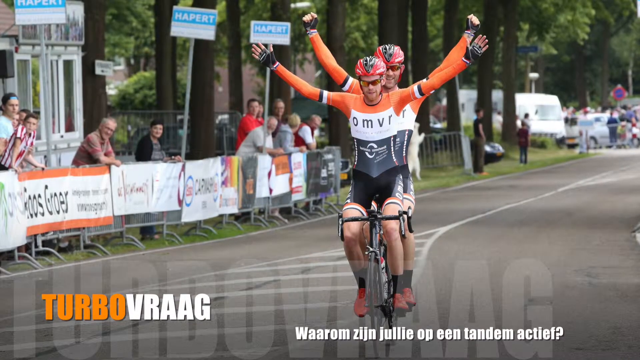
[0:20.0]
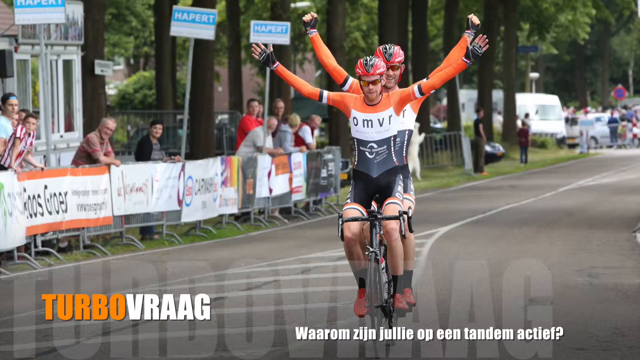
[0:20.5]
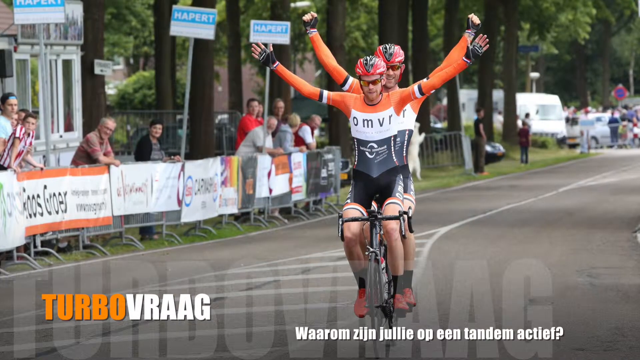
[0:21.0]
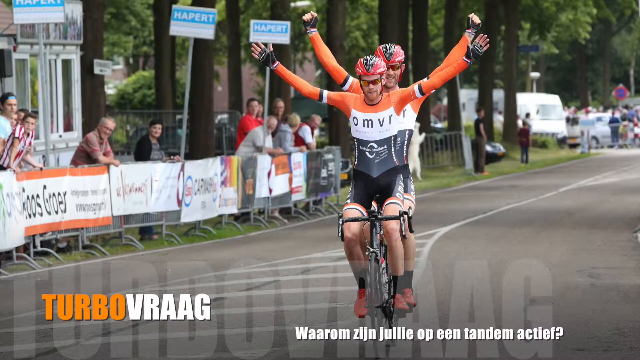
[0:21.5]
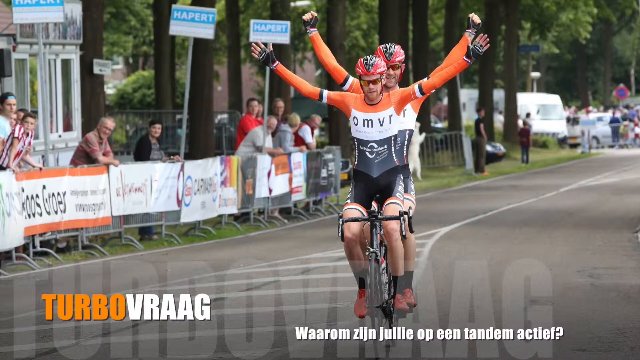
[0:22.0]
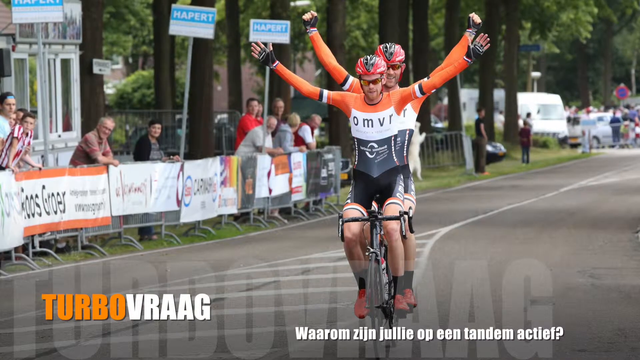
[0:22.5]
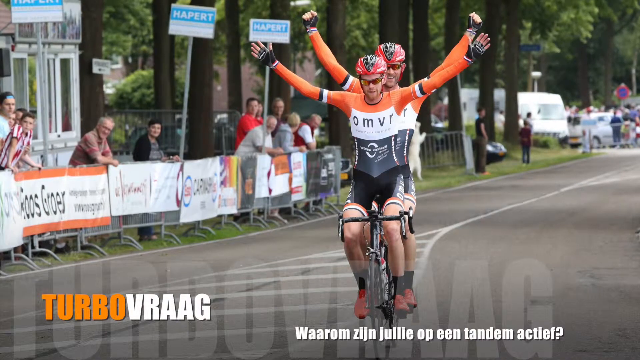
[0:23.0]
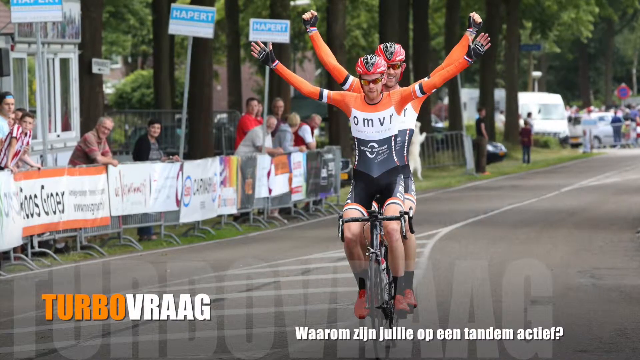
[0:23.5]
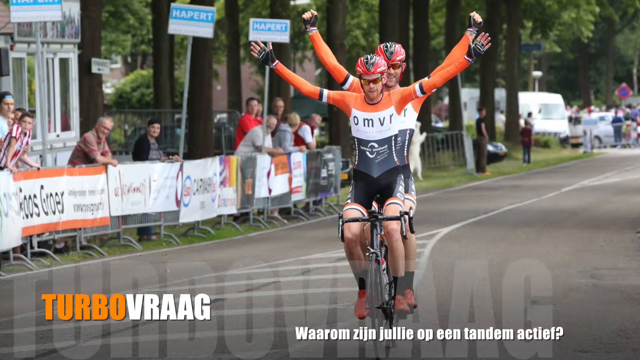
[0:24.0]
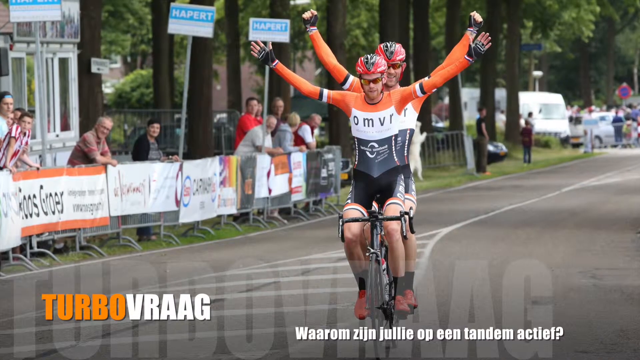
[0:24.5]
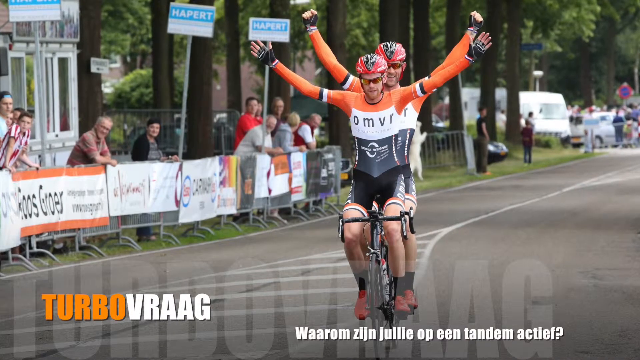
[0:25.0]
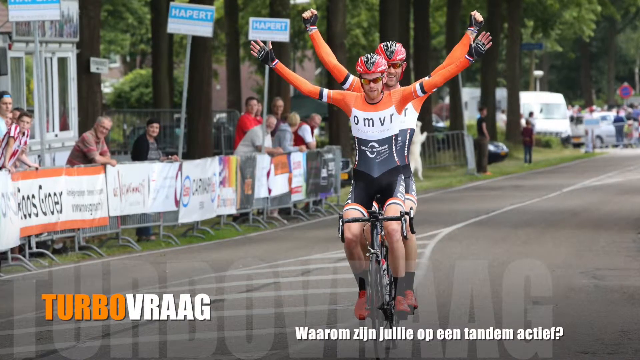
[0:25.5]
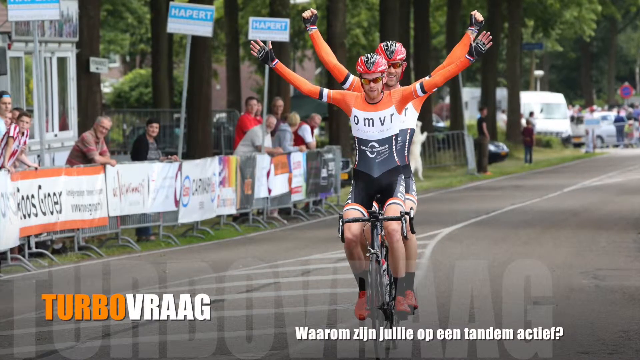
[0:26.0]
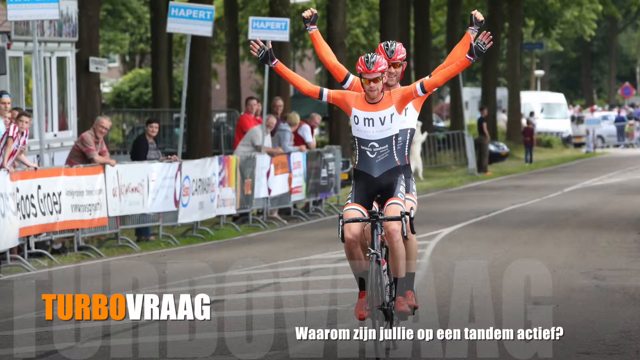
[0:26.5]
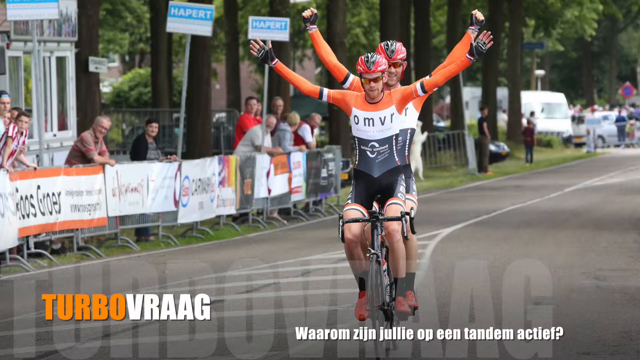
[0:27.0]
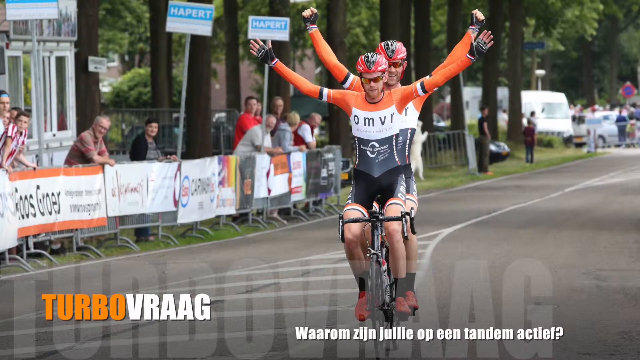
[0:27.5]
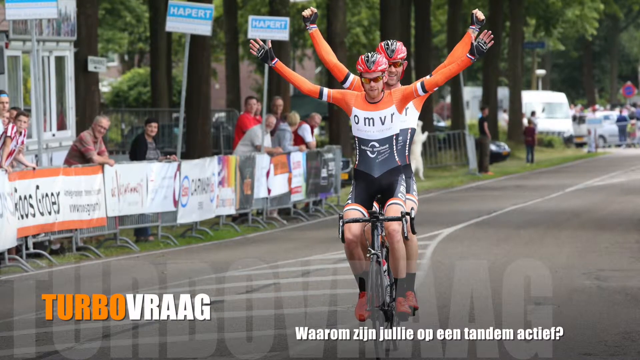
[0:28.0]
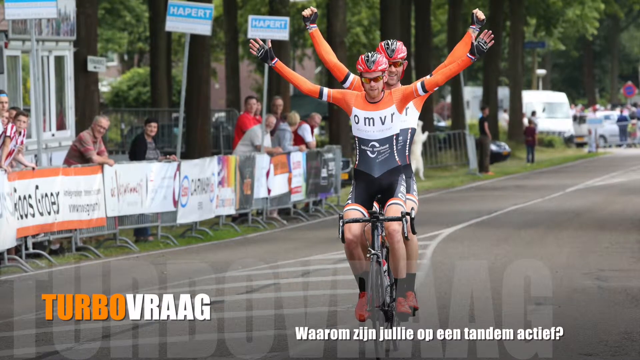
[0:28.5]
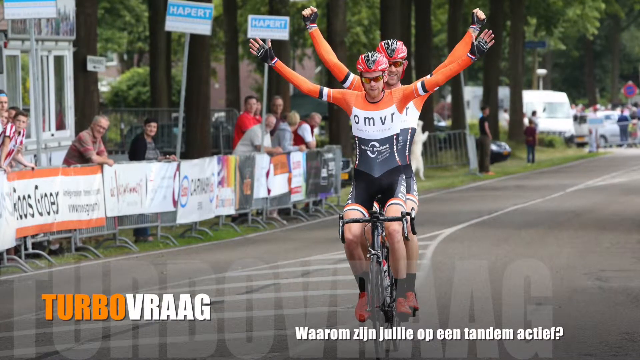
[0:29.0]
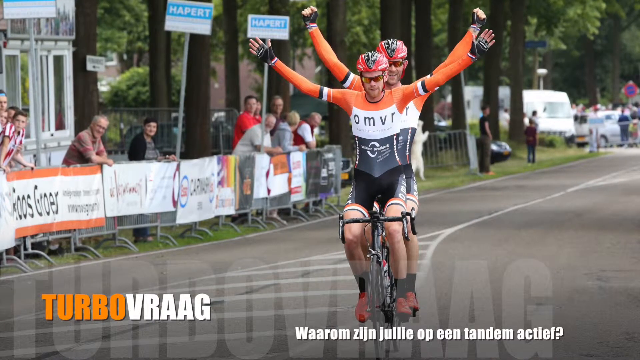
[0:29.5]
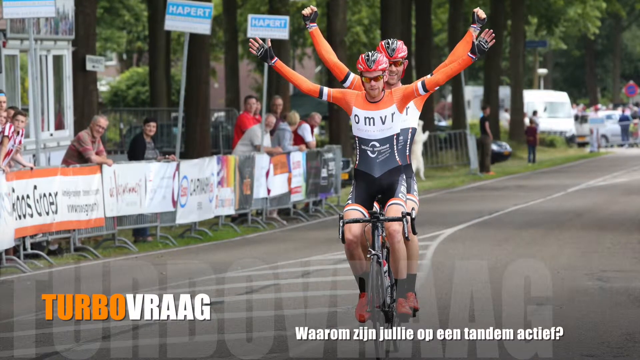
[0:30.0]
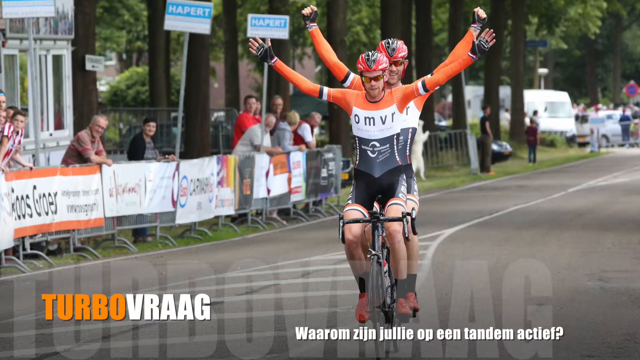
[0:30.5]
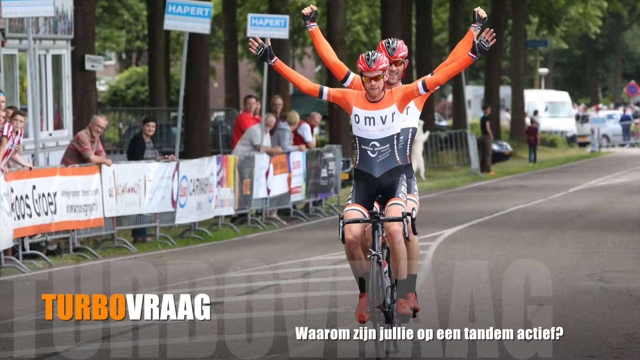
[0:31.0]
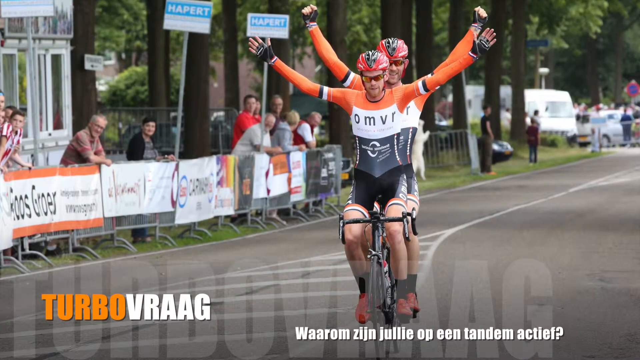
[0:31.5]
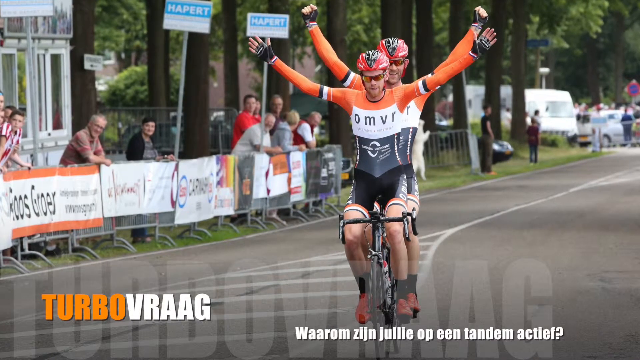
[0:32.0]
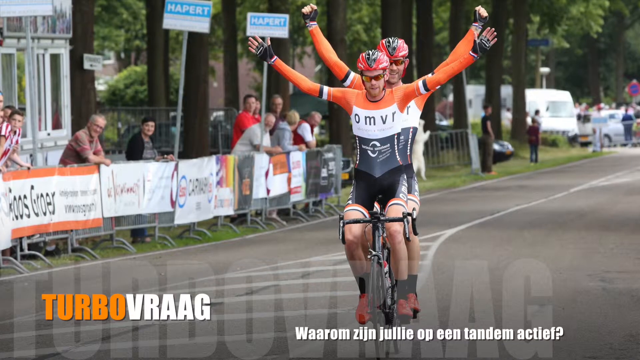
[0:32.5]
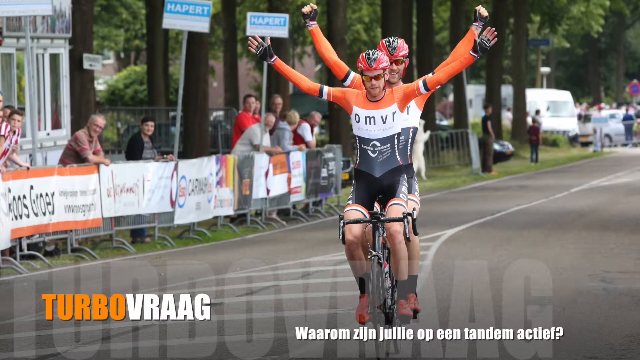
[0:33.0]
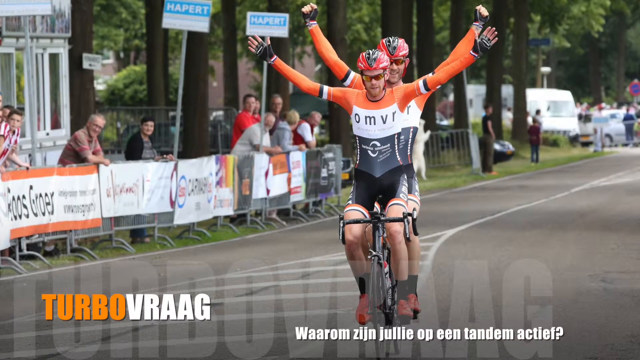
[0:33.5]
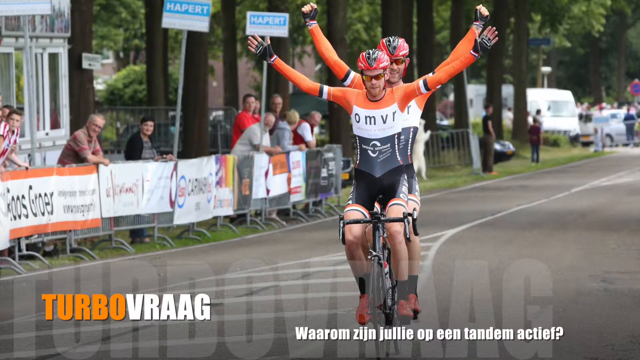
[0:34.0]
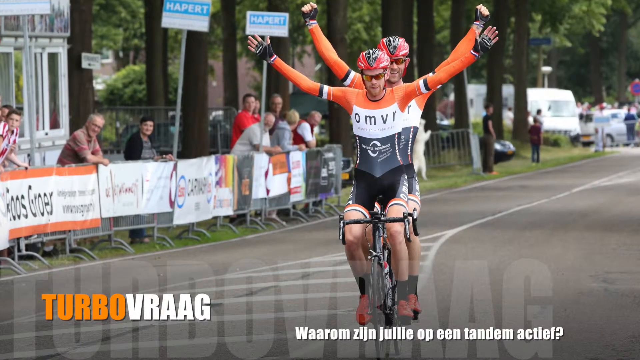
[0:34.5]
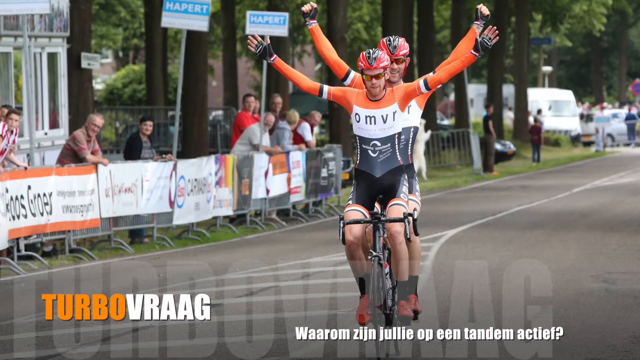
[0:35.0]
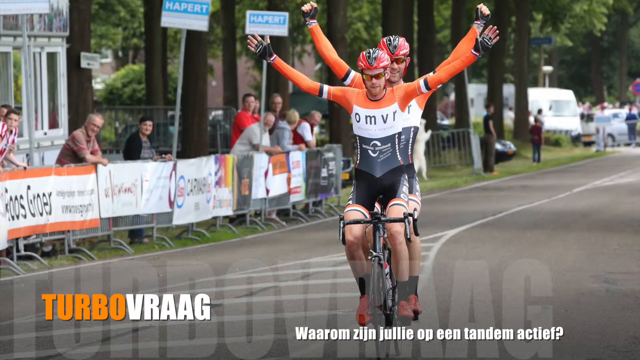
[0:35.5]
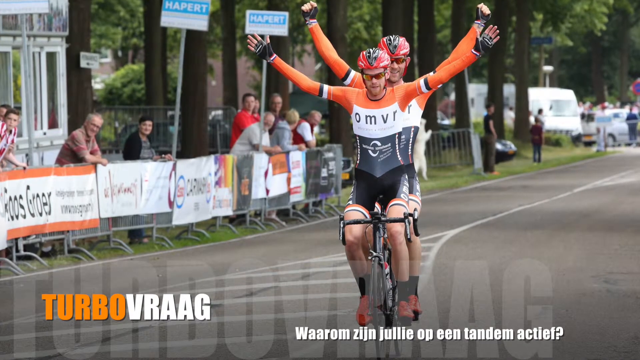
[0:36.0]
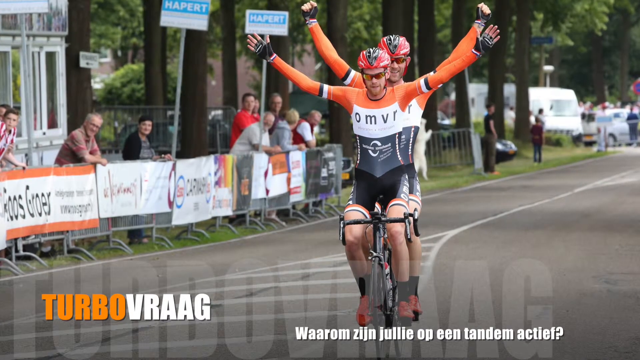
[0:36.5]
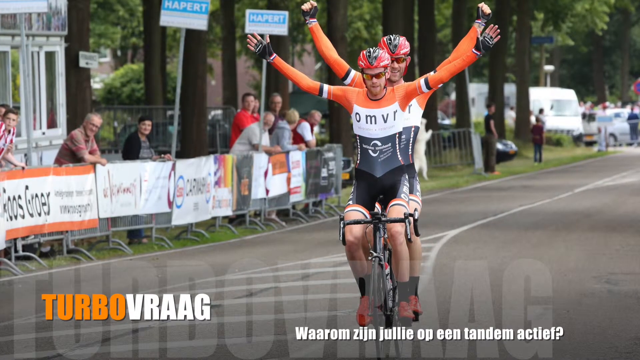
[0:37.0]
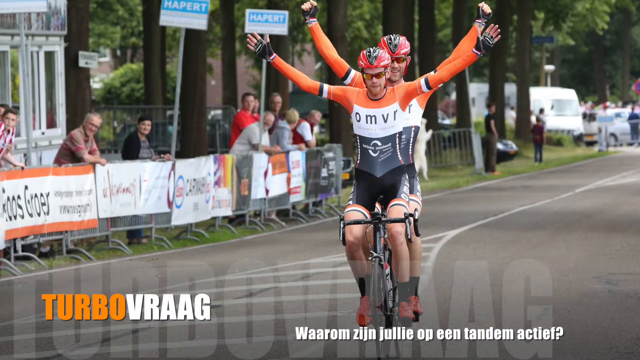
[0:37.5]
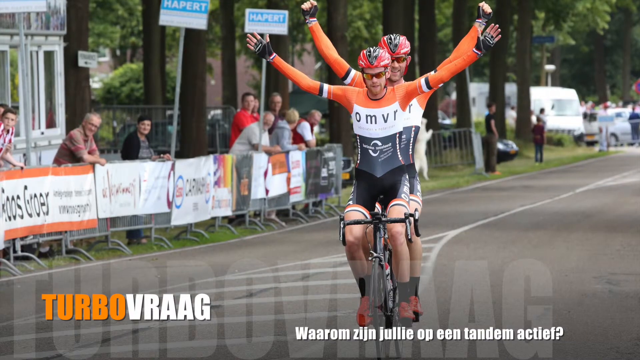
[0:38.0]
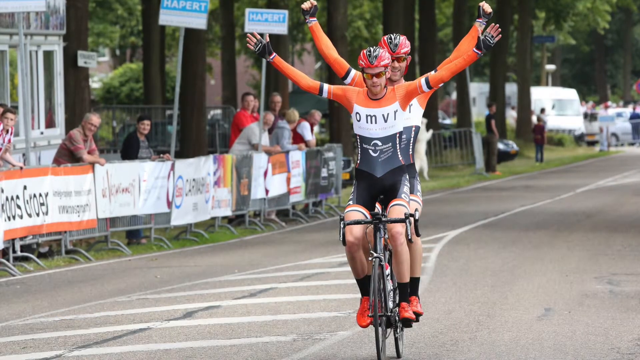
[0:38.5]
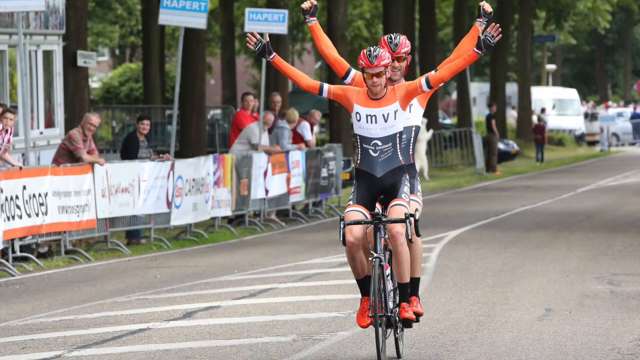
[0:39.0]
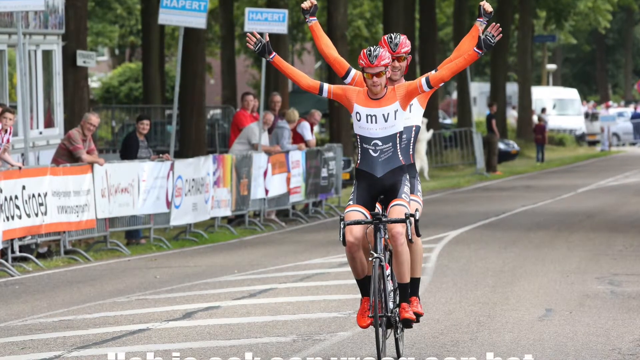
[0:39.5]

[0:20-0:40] The view is directly on the two cyclists; whether they are on one bike or two is unclear. Both have their arms raised in a victory pose and are smiling. Both wear glasses and black and red helmets. Their uniforms are long-sleeved tops in orange, black and white, and they wear open-fingered gloves. Their shorts are black with red, white and black ends, and they wear black socks and red shoes. On the left are barricades with maybe a dozen or so people looking on. In the bottom left, the words "Turbo" in orange and "VRAAG" in white appear.